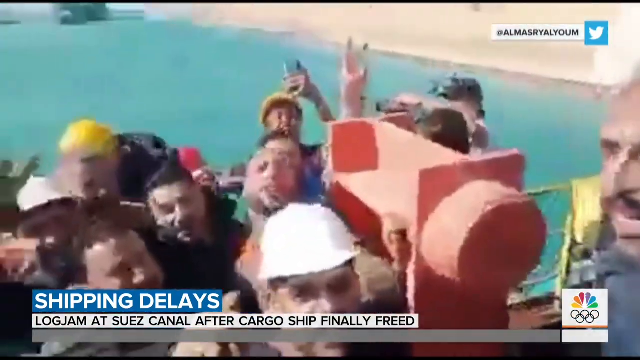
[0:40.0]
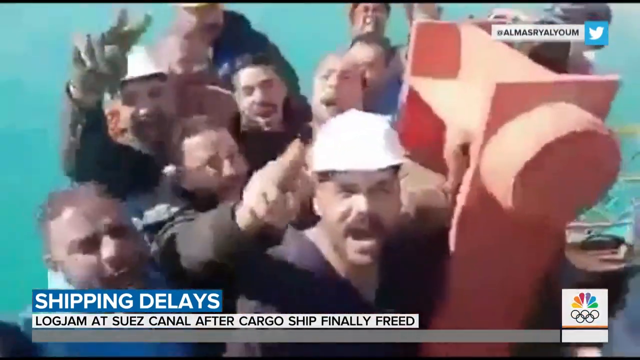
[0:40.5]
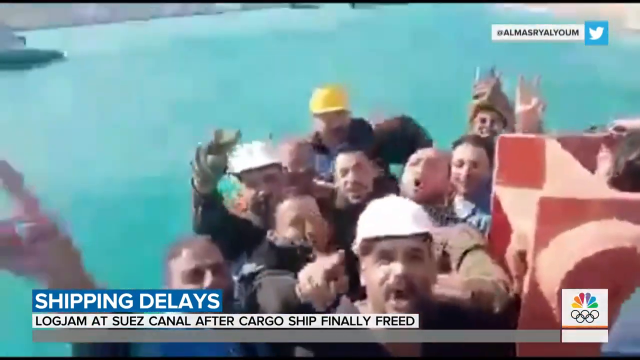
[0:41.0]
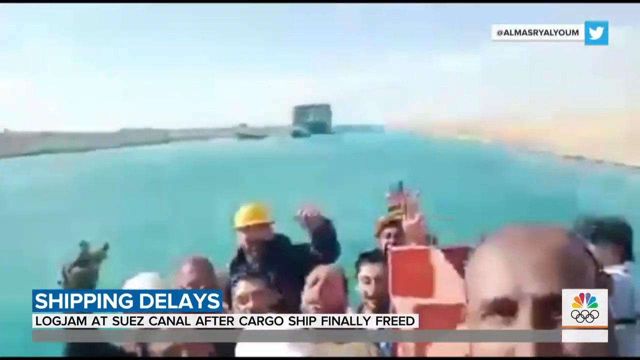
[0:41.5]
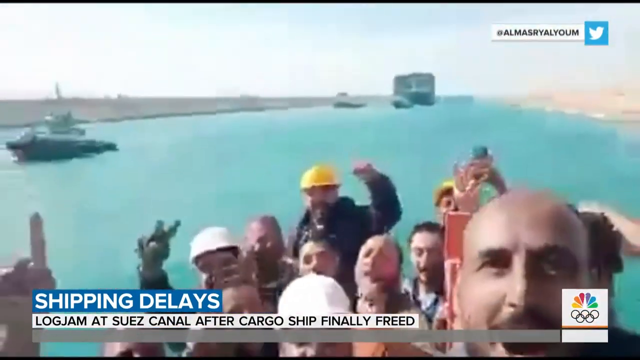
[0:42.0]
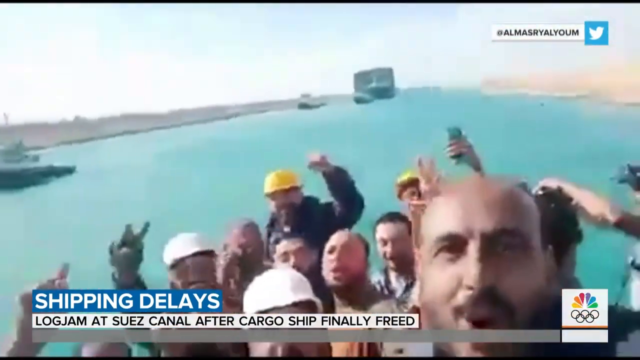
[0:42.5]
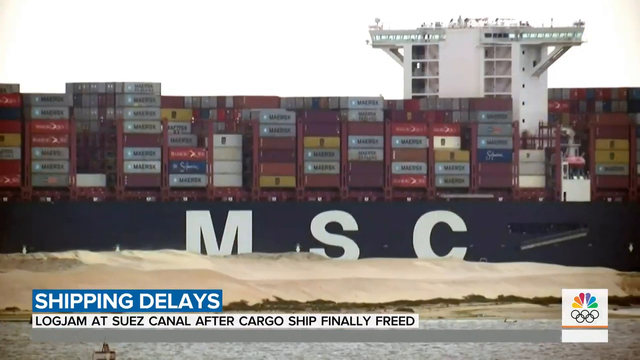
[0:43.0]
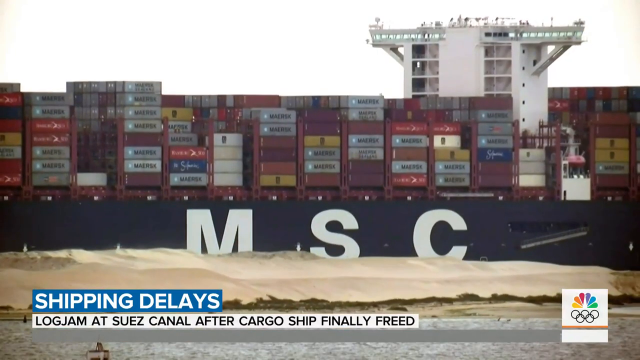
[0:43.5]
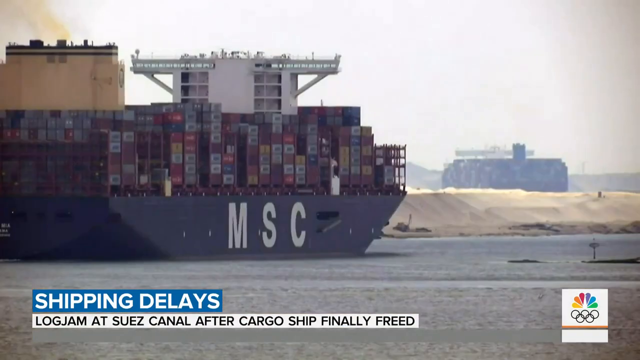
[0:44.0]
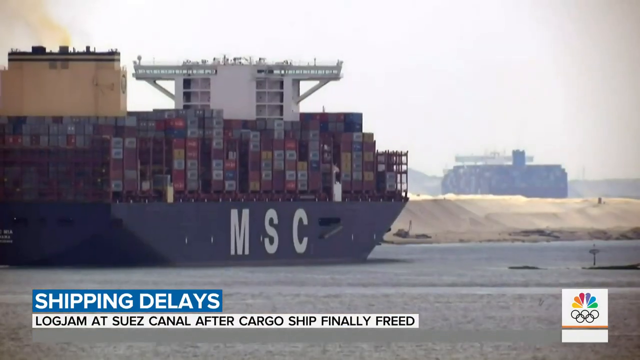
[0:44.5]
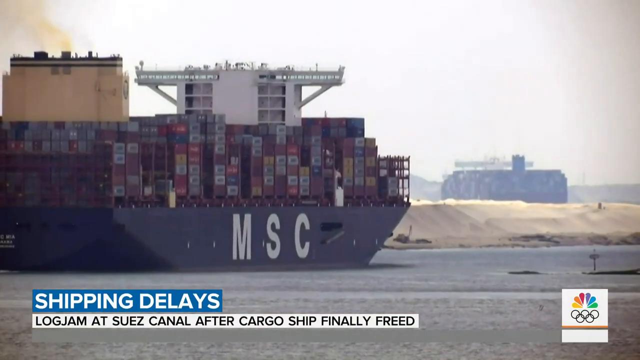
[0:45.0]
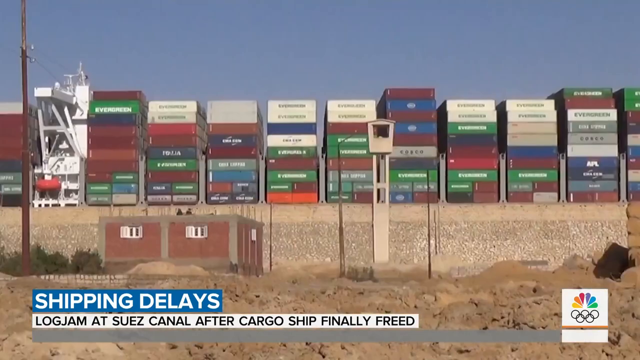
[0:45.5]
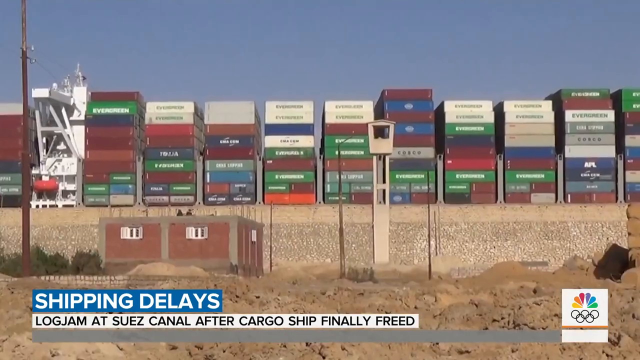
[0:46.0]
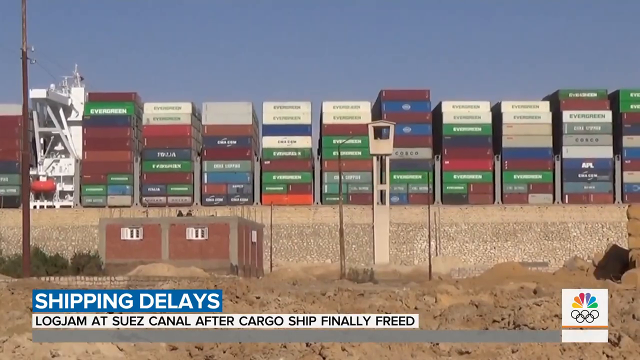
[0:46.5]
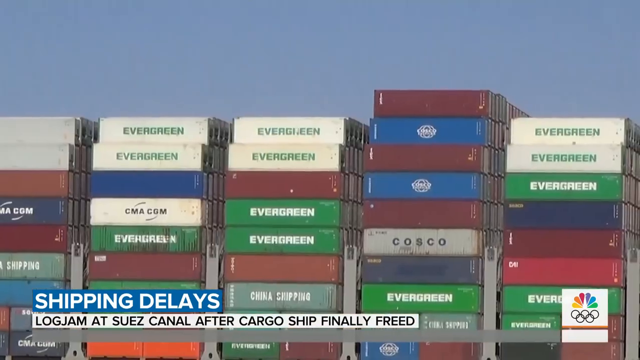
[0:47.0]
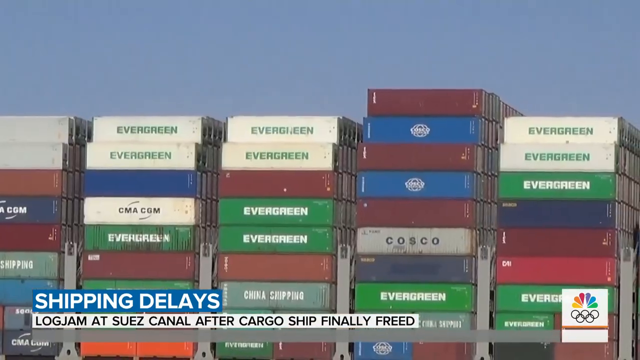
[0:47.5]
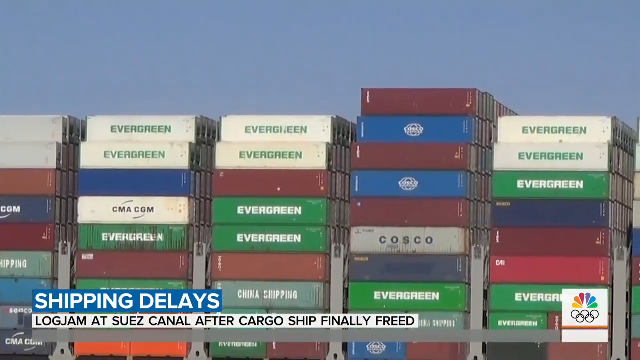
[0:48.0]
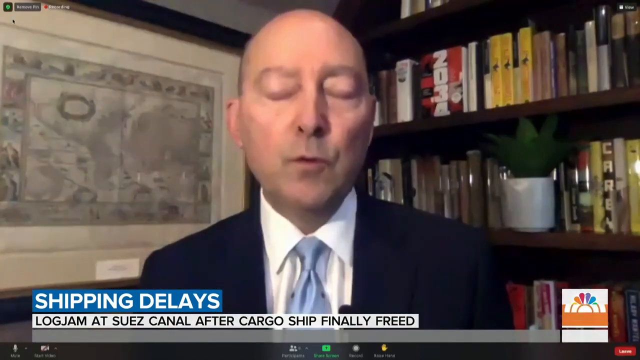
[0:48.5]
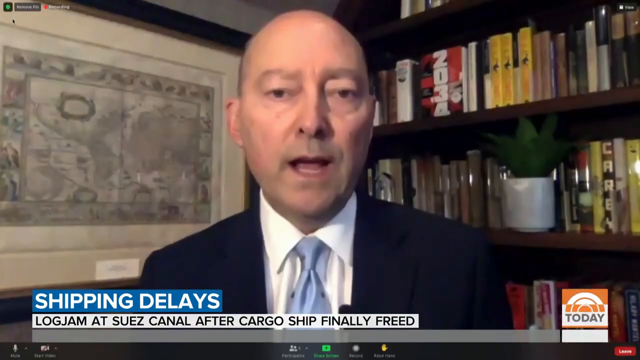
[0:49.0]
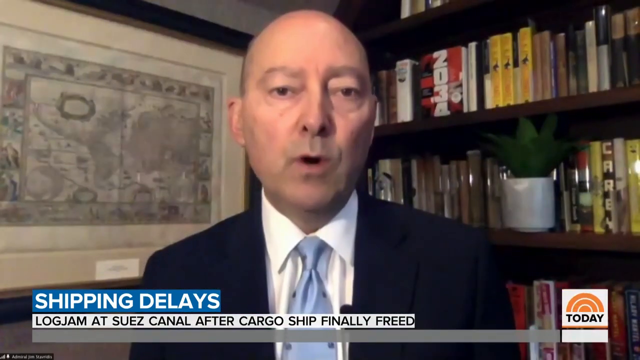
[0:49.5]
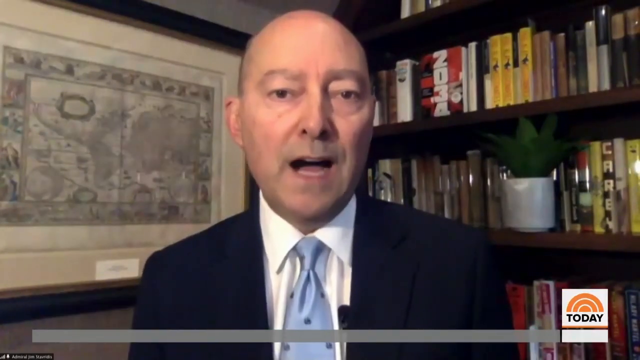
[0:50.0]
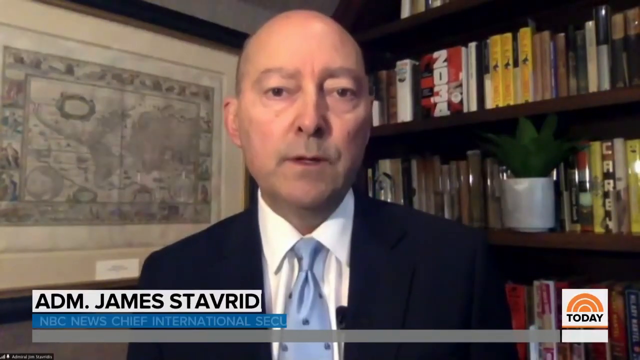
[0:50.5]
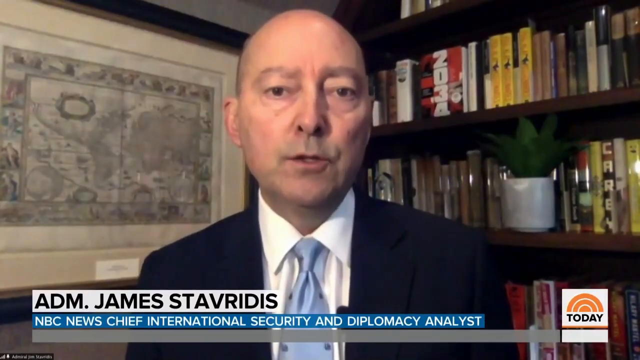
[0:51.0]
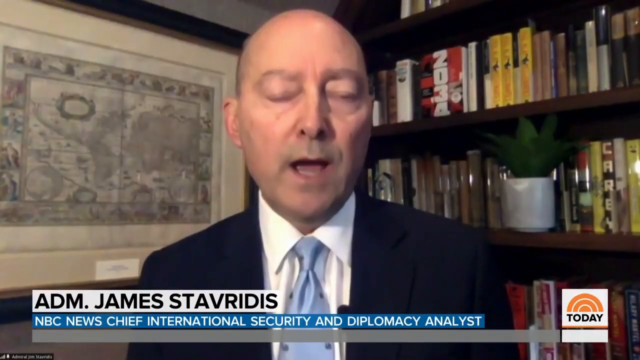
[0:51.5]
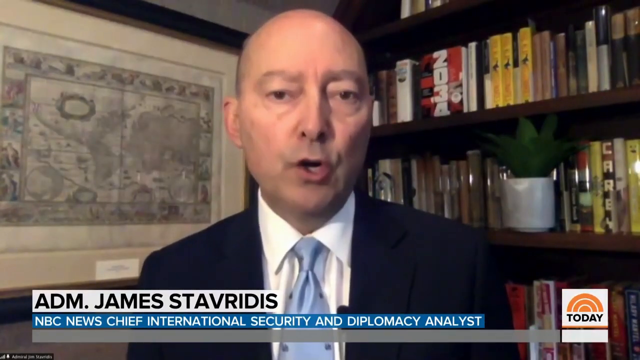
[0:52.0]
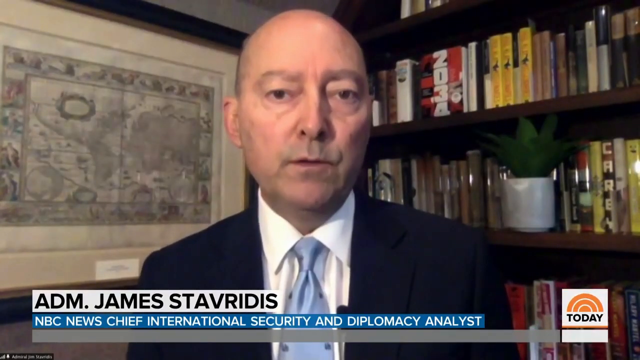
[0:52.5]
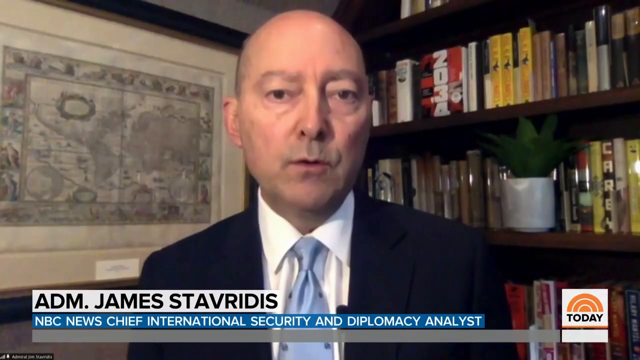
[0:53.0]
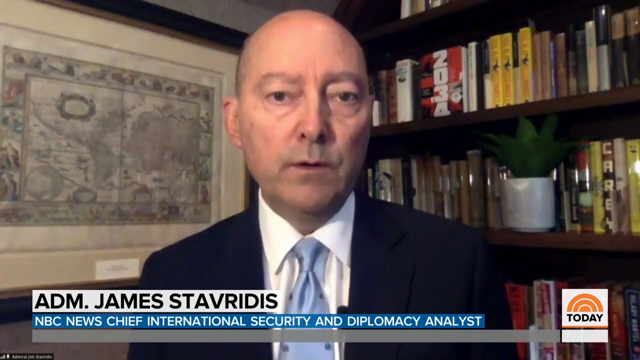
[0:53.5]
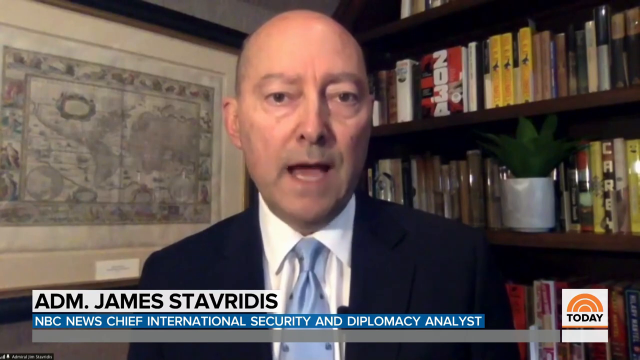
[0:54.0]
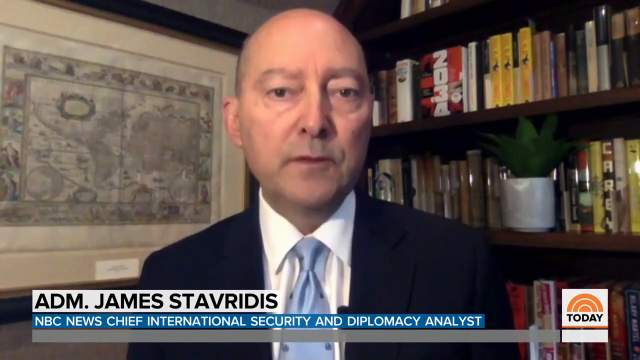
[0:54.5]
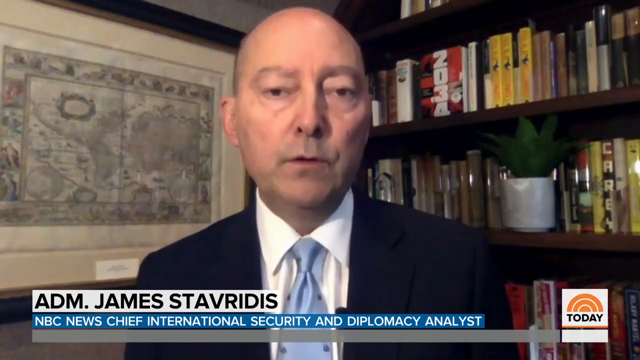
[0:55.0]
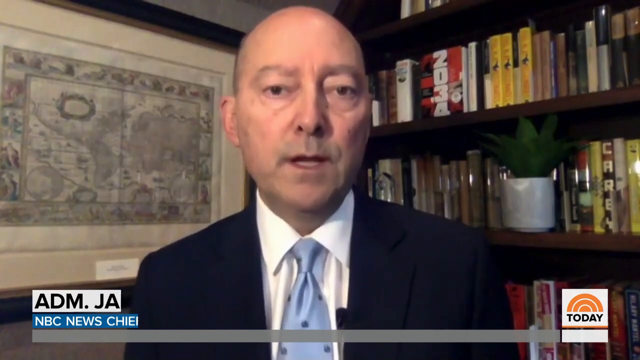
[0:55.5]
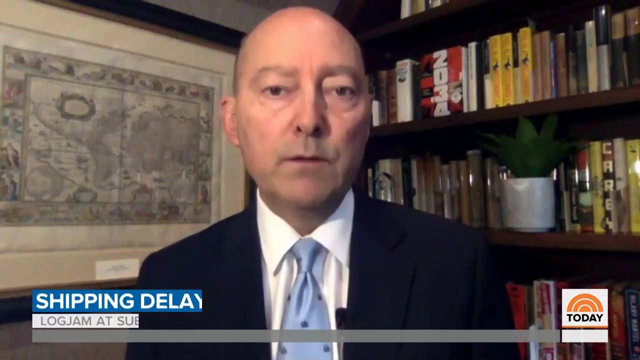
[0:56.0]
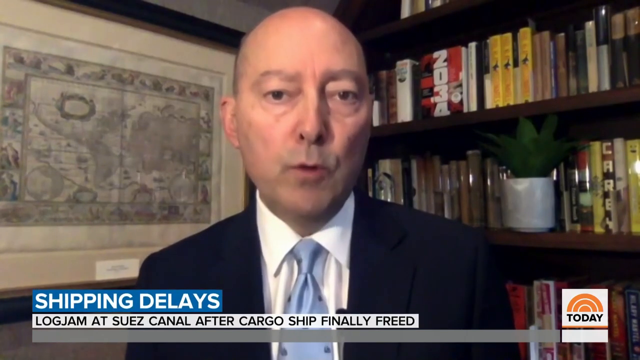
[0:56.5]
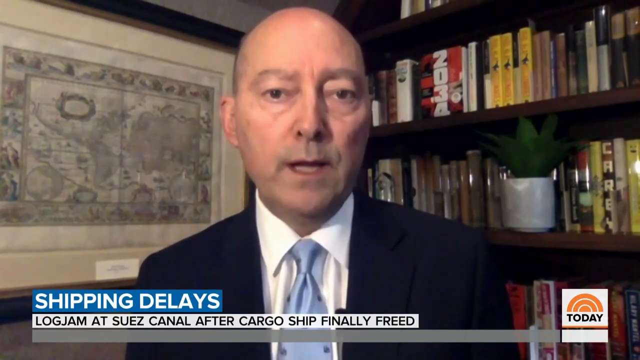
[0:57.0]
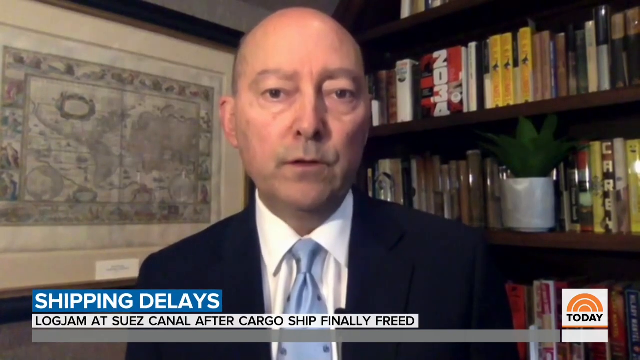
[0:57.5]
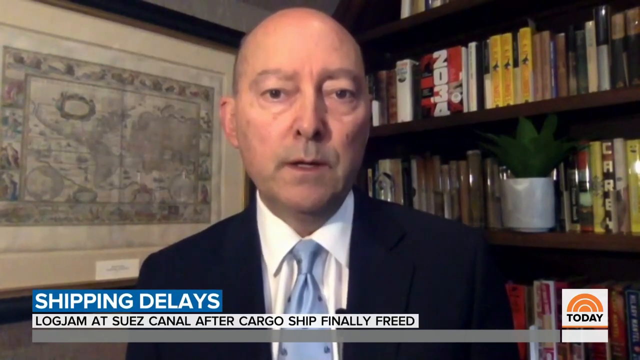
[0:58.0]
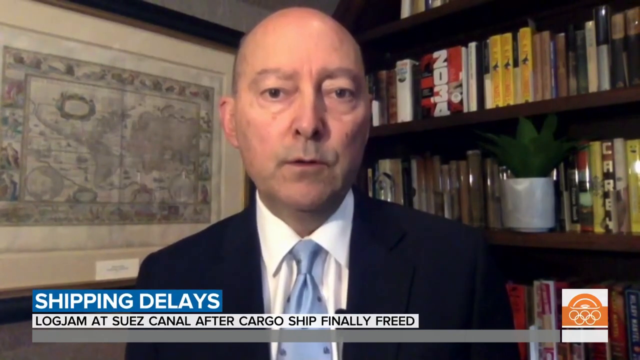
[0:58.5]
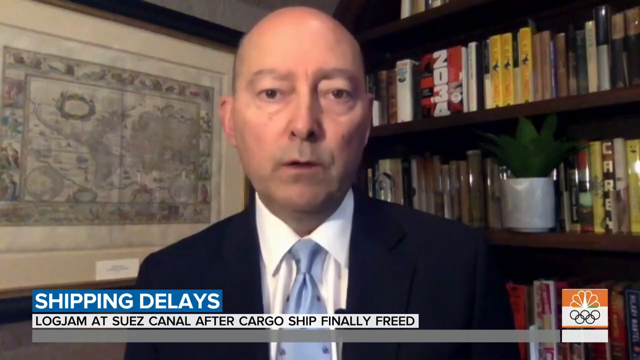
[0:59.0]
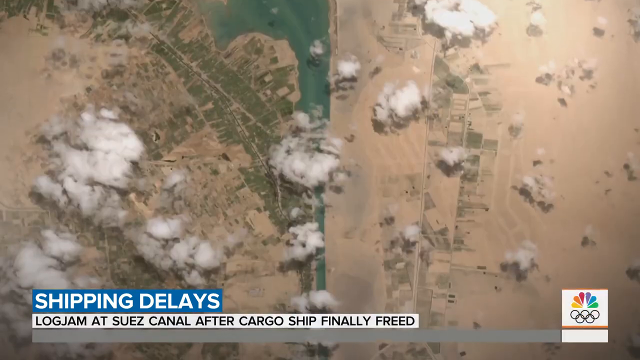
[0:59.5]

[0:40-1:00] The group of people continues jumping up and down. The large ship with all its freight then appears, slowly moving to the right of the screen. Next, from what looks like a desert, the stacked freight is seen slowly moving to the left. The same scene is then zoomed in on the freight, much of which says "evergreen." Another man appears, bald, in a suit with a light blue tie, with the camera fairly zoomed in on him. He is inside, with a bookcase and then a painting behind him. He is James Stavridis, NBC News Chief International Security and Diplomacy Analyst. His mouth moves as he speaks into the camera, and he blinks once. Then the title below reads "Shipping delays log jam at Suez Canal after cargo ship finally freed."